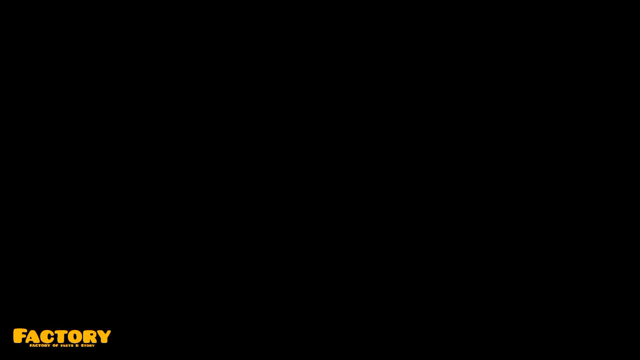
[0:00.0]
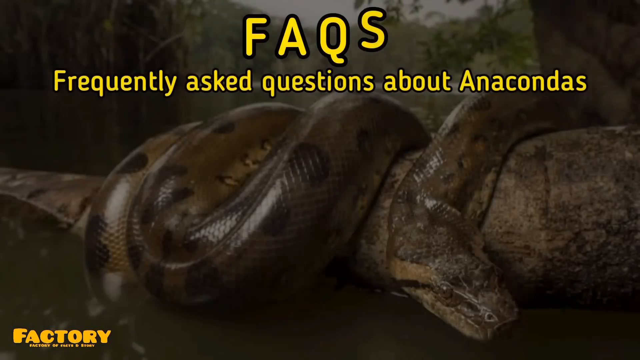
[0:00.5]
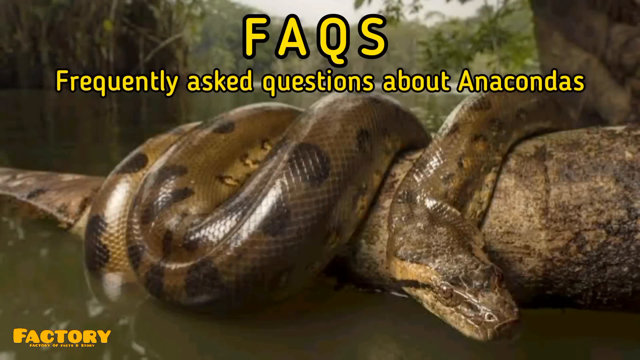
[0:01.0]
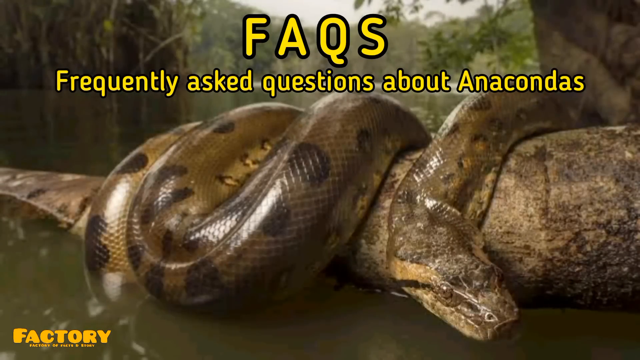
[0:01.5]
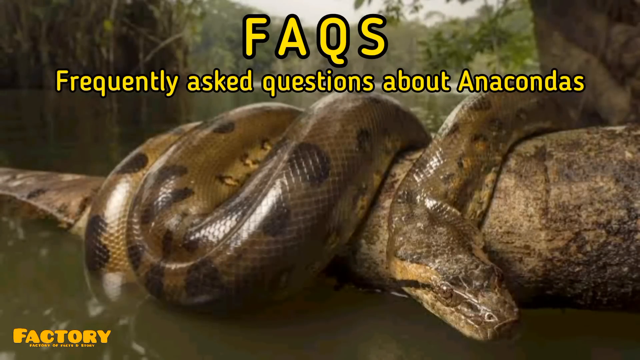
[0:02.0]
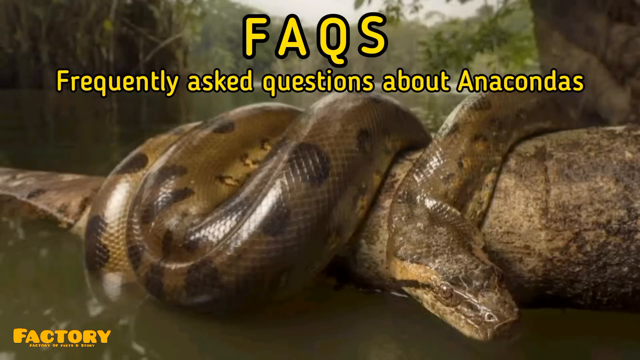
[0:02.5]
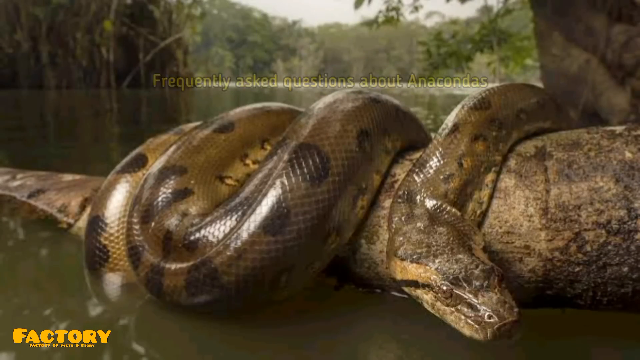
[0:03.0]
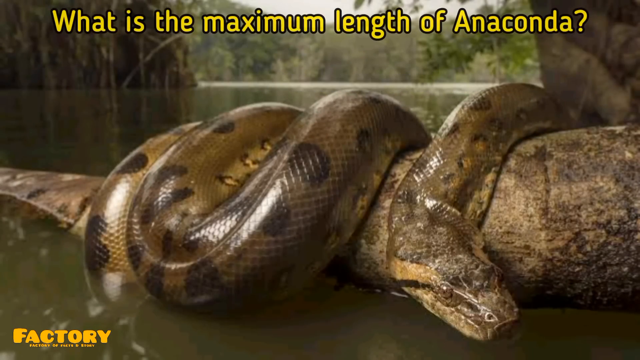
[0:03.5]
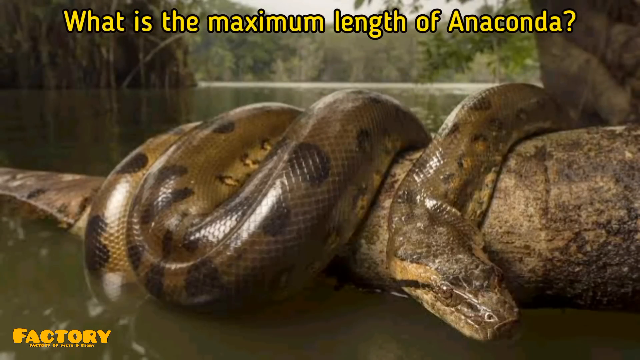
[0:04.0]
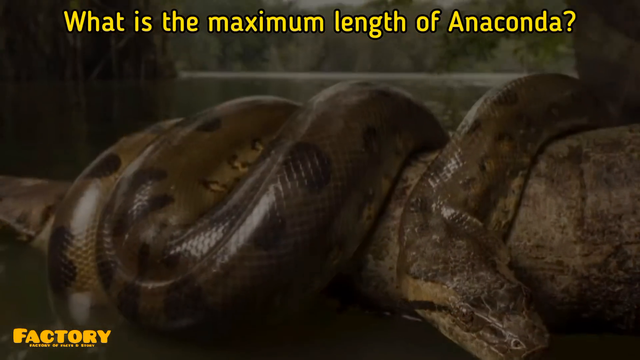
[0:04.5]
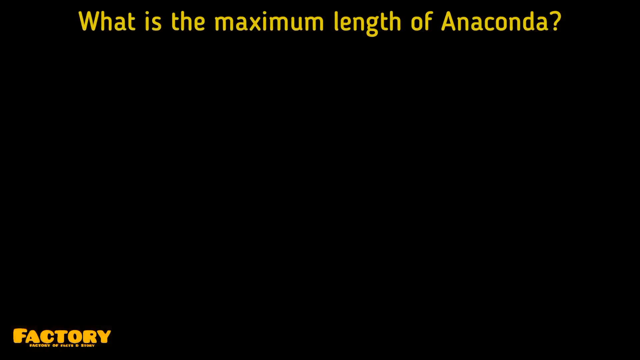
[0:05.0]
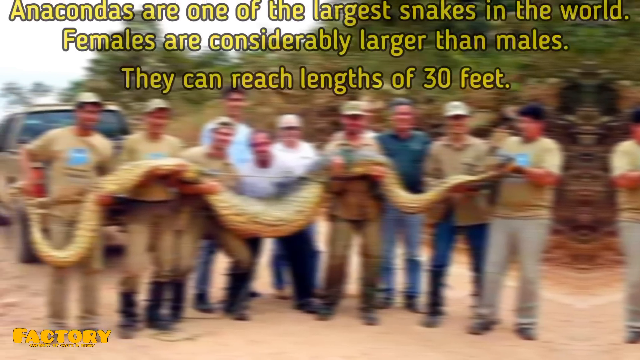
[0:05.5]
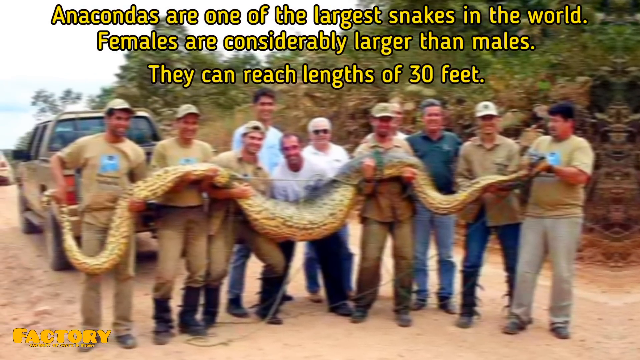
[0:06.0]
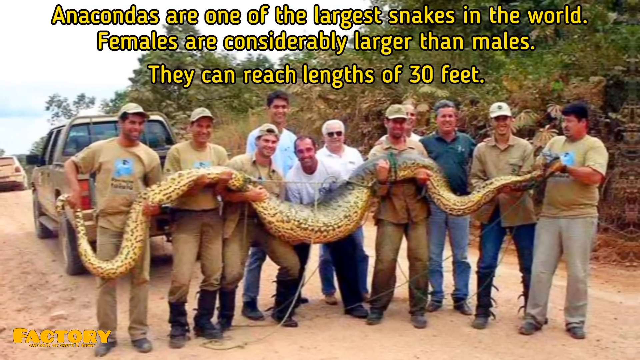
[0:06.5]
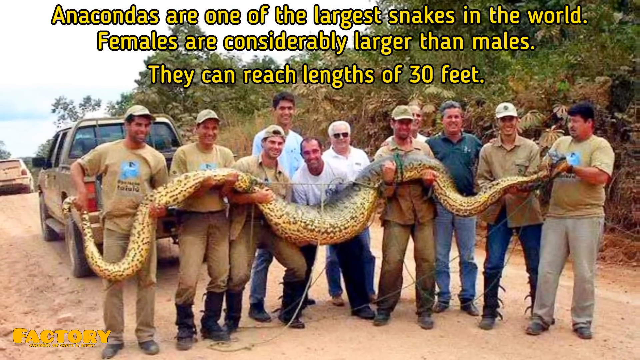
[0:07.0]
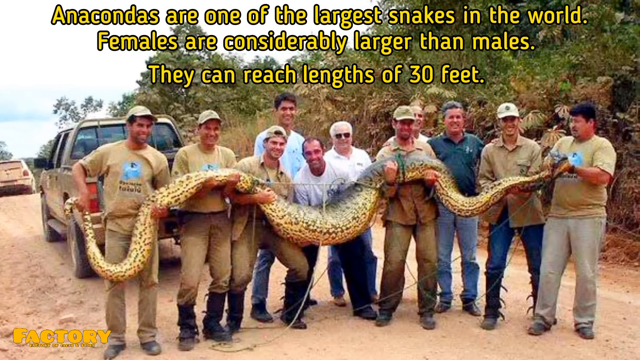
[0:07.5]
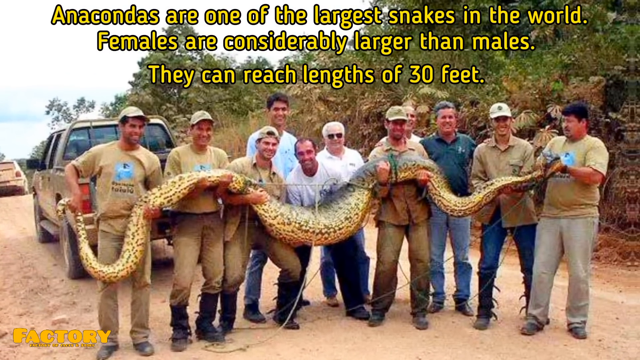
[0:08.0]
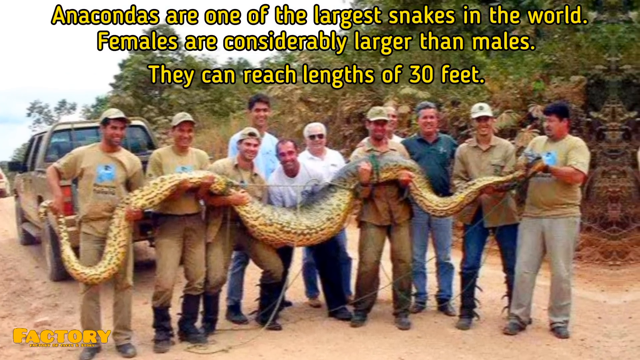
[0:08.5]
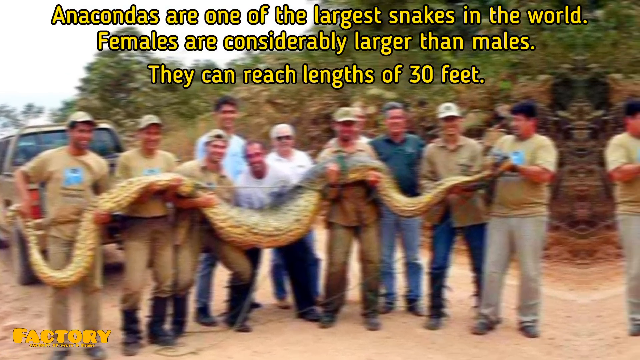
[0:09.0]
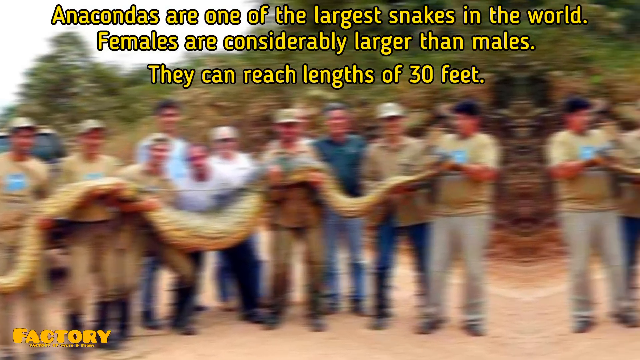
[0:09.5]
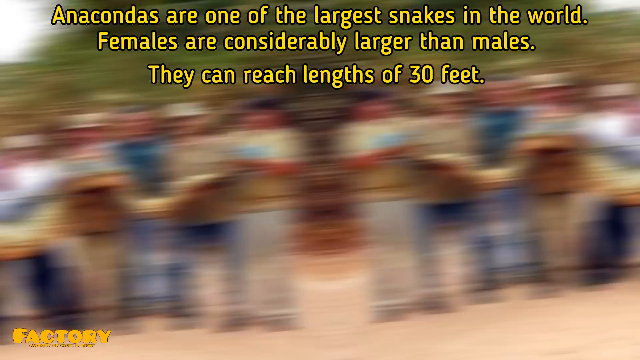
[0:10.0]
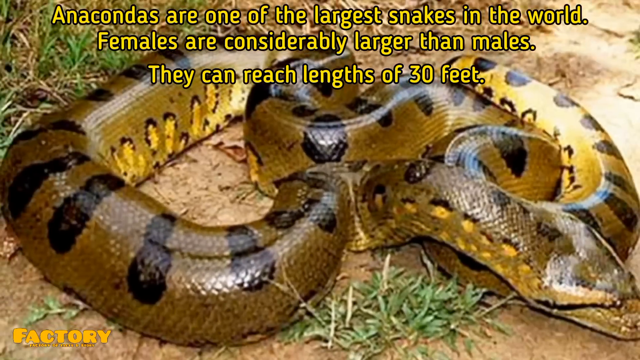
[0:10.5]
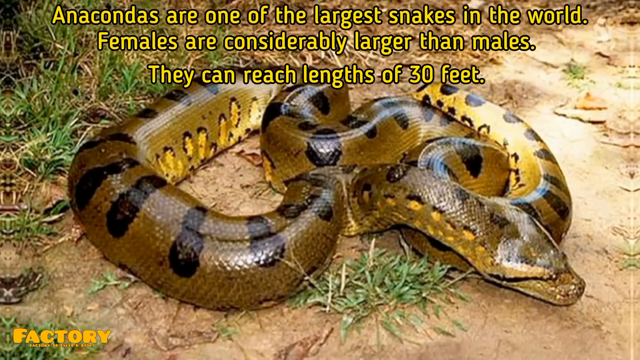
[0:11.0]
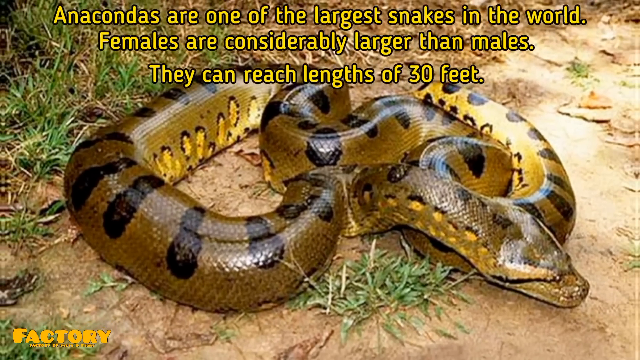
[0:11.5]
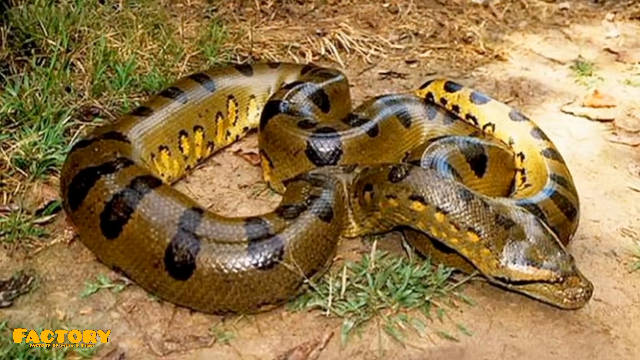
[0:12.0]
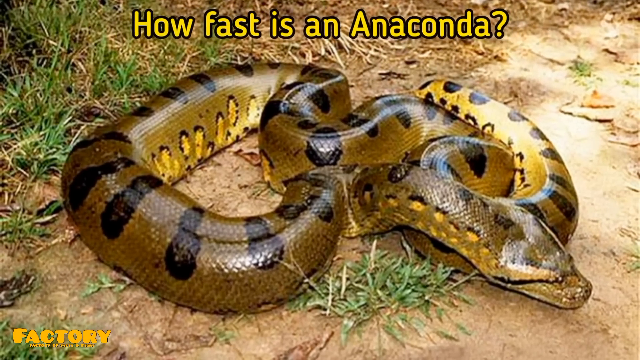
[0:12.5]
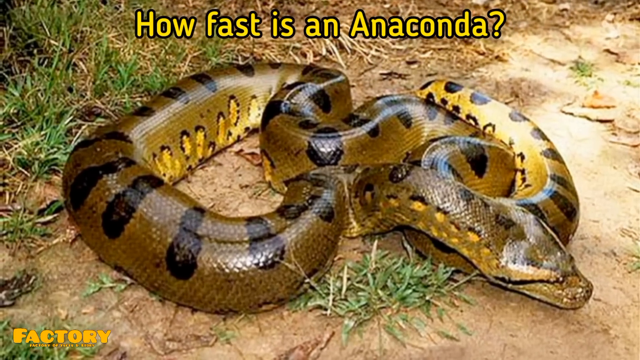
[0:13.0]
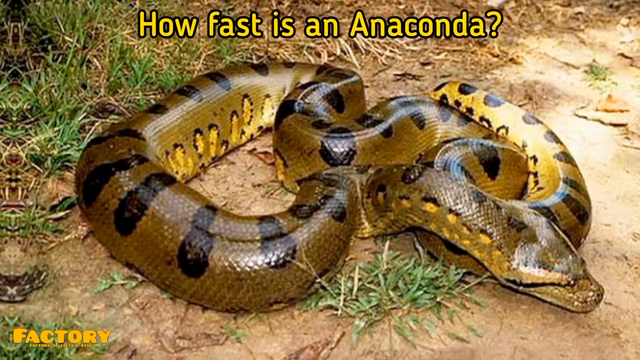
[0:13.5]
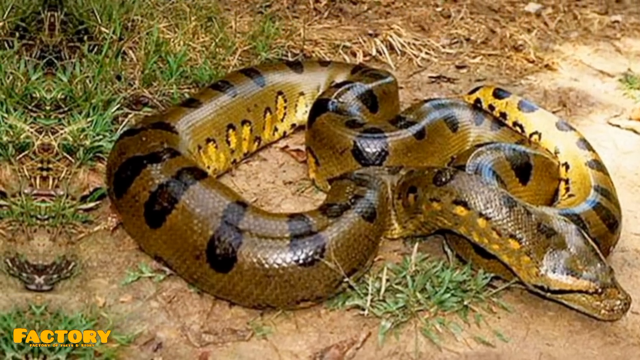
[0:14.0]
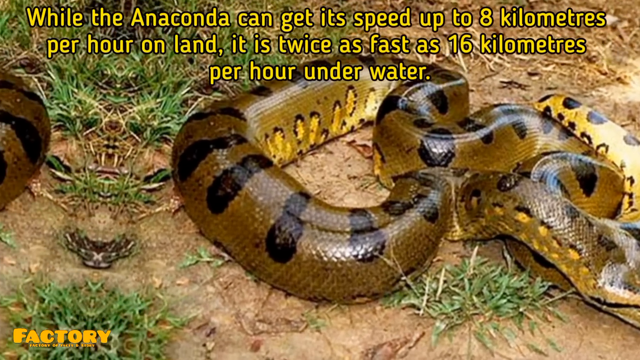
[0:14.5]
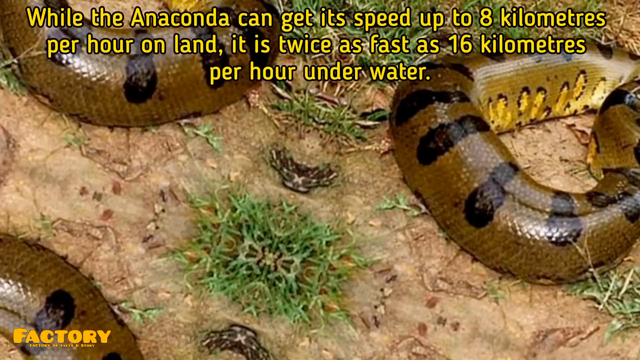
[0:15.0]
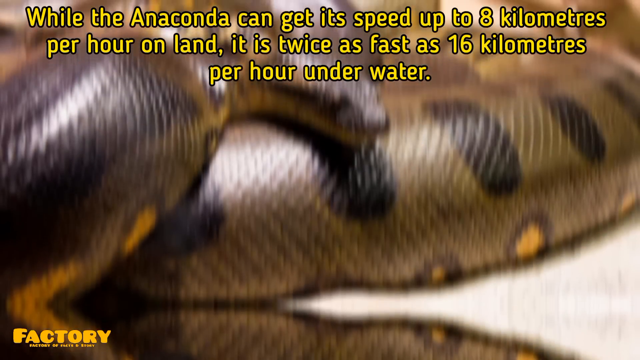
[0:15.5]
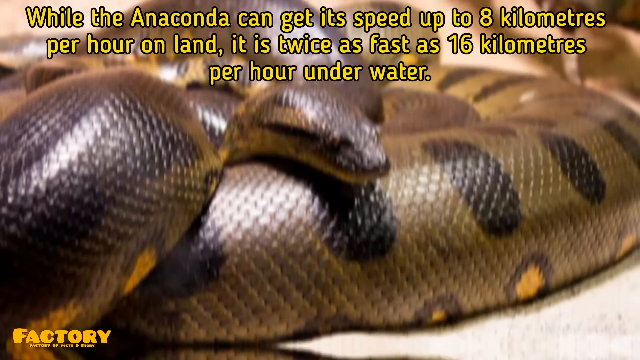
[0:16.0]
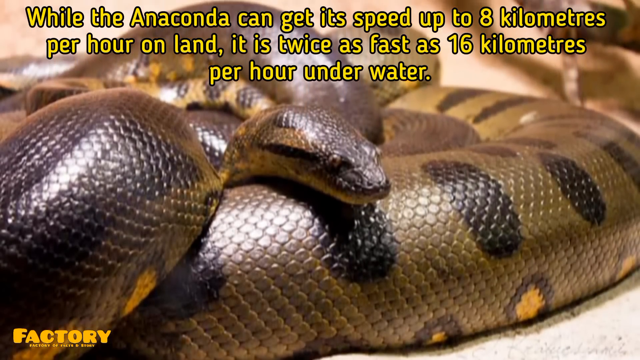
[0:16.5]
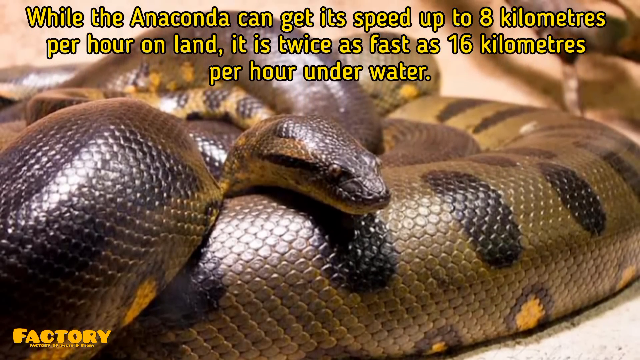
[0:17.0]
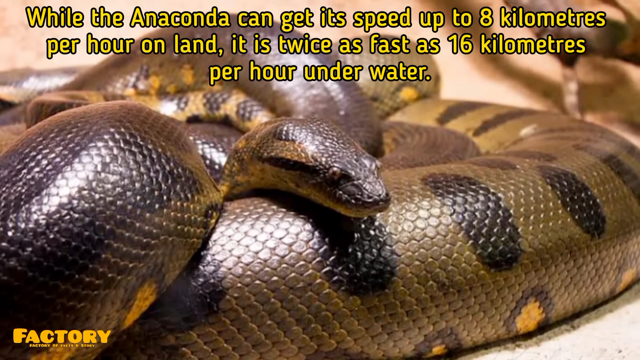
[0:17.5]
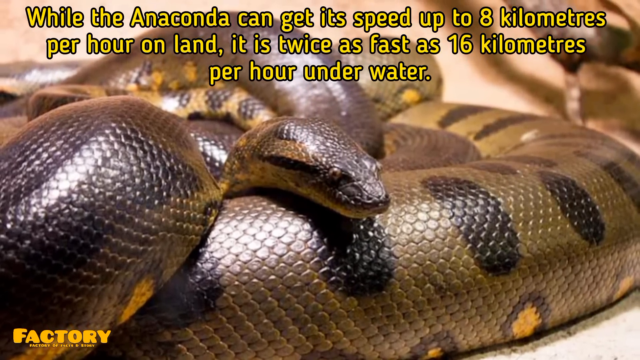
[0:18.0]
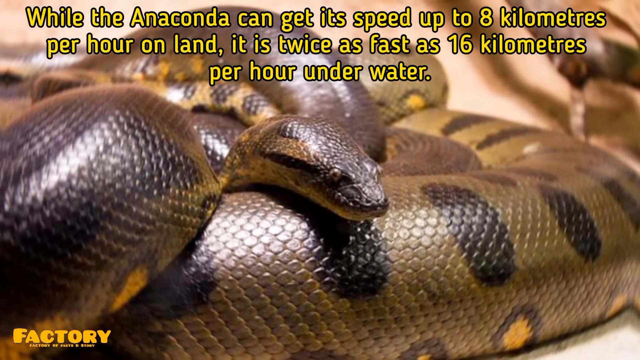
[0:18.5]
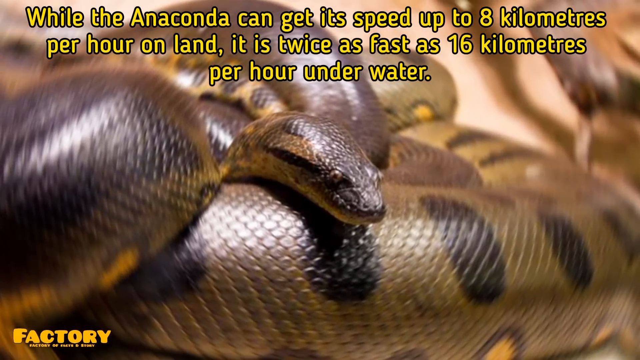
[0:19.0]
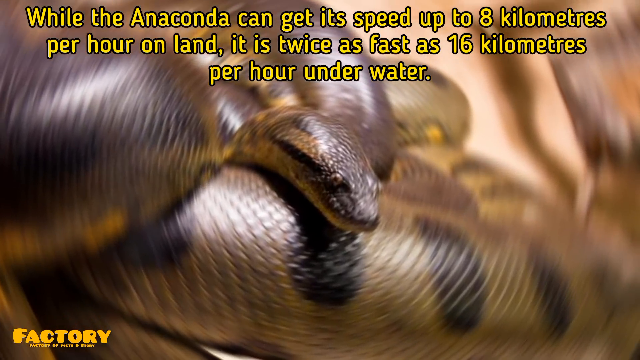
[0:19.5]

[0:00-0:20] Yellow text at the top of the video reads "FAQs," and below it, "frequently asked questions about Anacondas." In the background is an image of an anaconda wrapping itself around a giant log. The log looks brown, the same colour as the anaconda, which has black circular spots all across its back and a very smooth texture. Its back appears to reflect light, suggesting it is probably moist. The anaconda's head is at the bottom right, looking to the right. Behind the anaconda is a sort of swampy area, with large trees in the background. The camera zooms out and the text at the top changes to "what is the maximum length of Anaconda." The scene switches to a group of about 11 people holding a very large anaconda from tail to head, and the text at the top changes again: "anacondas are one of the largest snakes in the world Females are considerably larger than males. It can reach lengths of 30 feet." The screen then changes to a close-up shot of an anaconda with text about how fast an anaconda is, saying "anacondas can get its speed up to 8 kilometers on land."